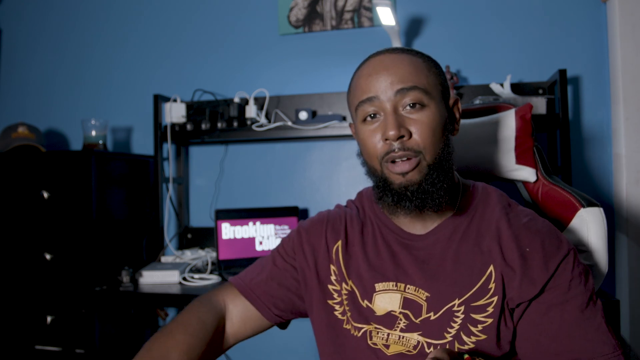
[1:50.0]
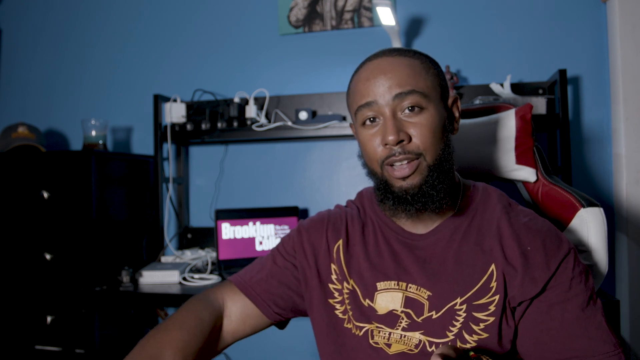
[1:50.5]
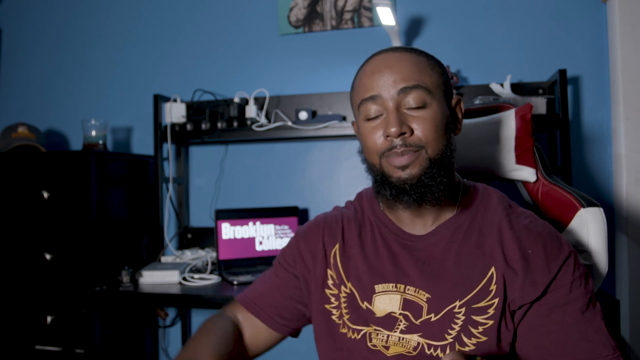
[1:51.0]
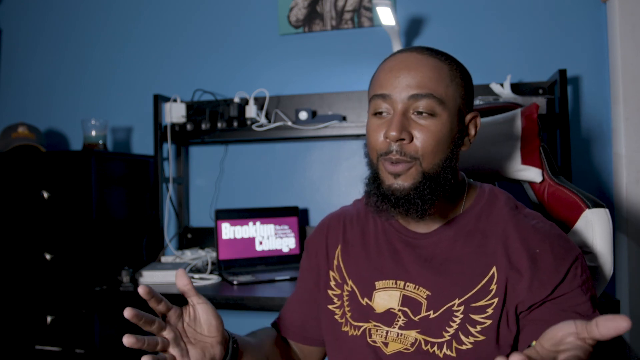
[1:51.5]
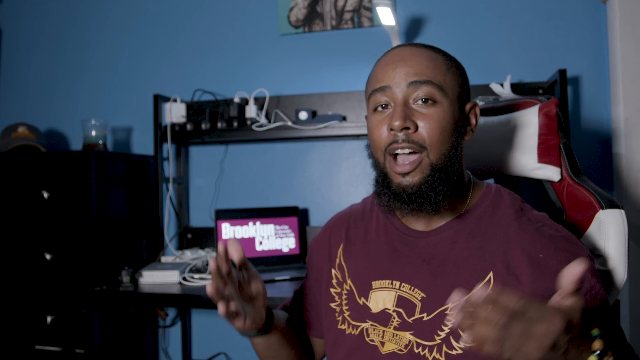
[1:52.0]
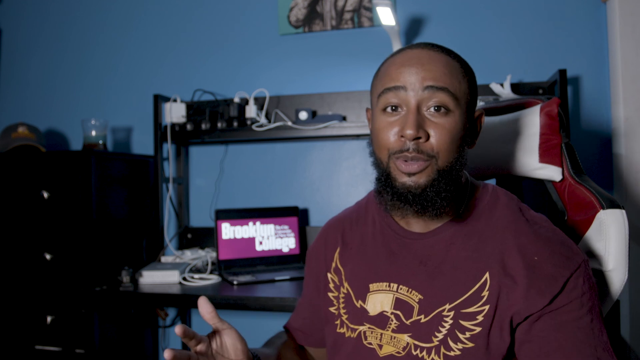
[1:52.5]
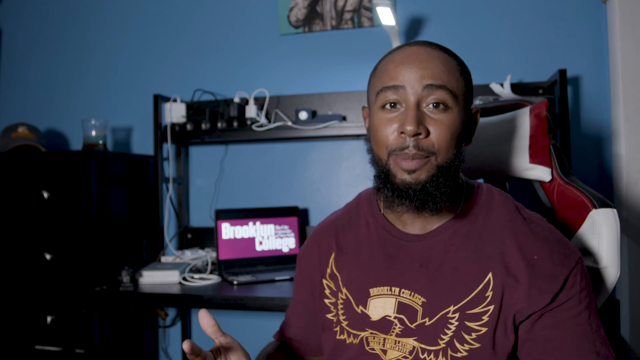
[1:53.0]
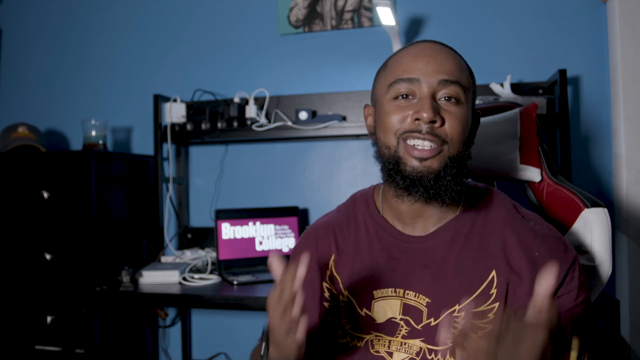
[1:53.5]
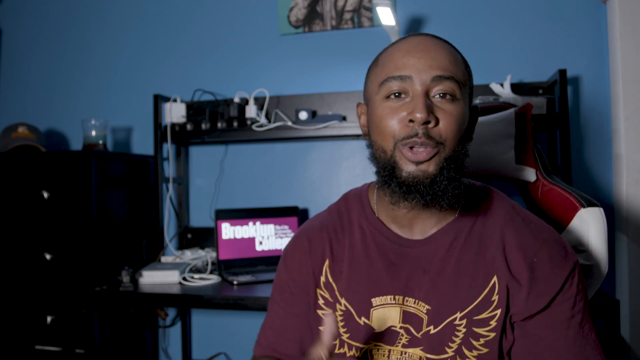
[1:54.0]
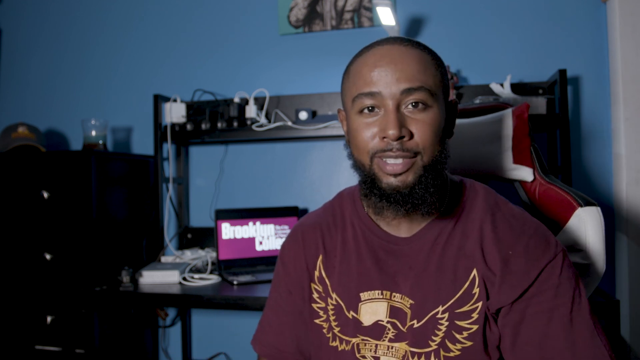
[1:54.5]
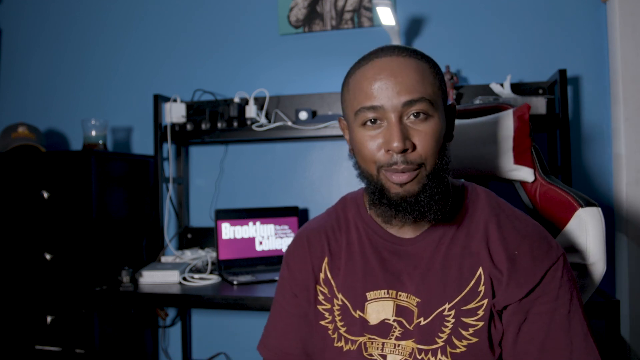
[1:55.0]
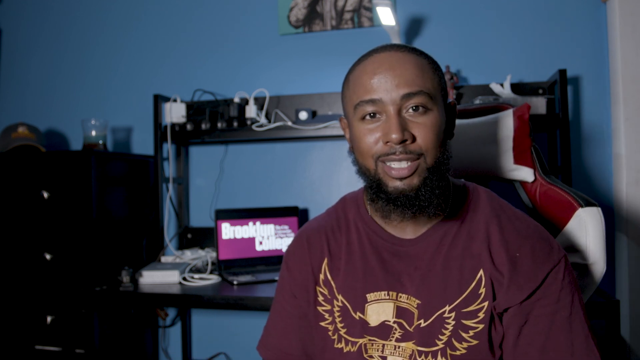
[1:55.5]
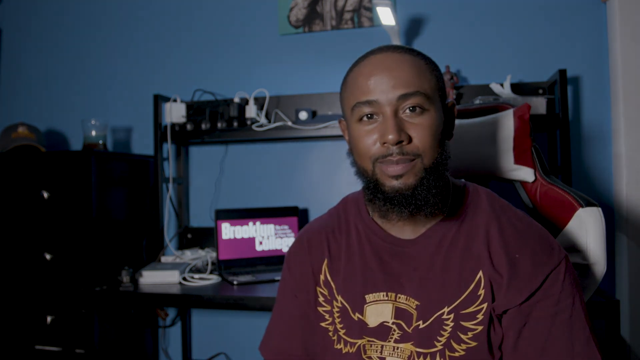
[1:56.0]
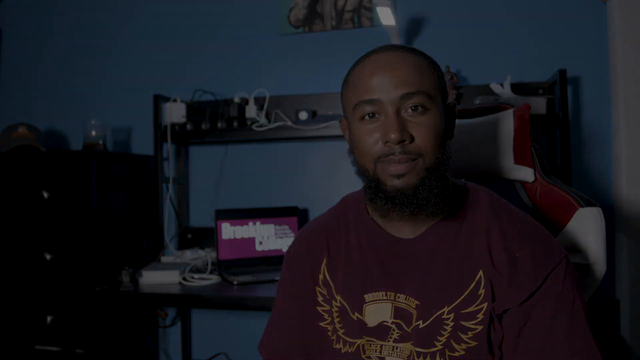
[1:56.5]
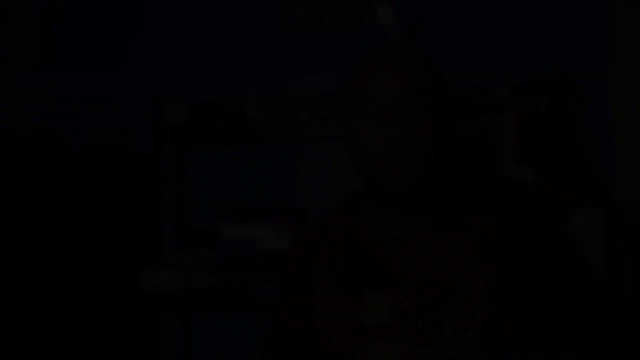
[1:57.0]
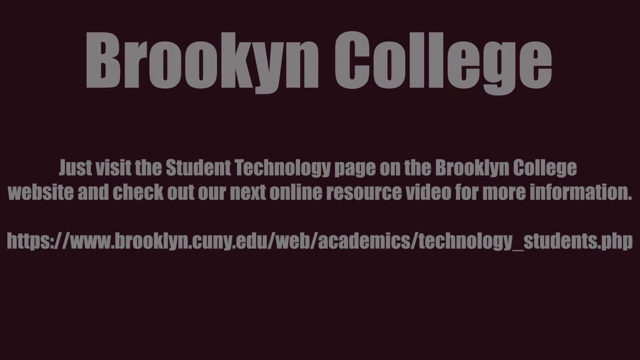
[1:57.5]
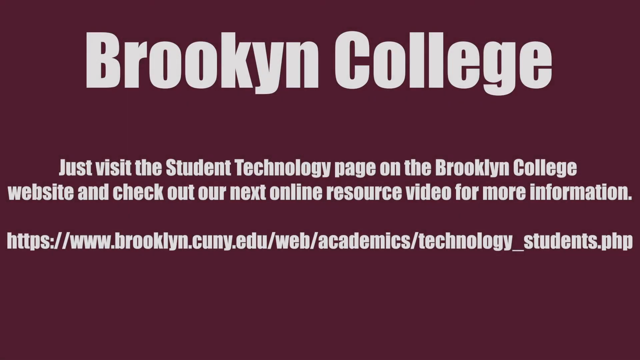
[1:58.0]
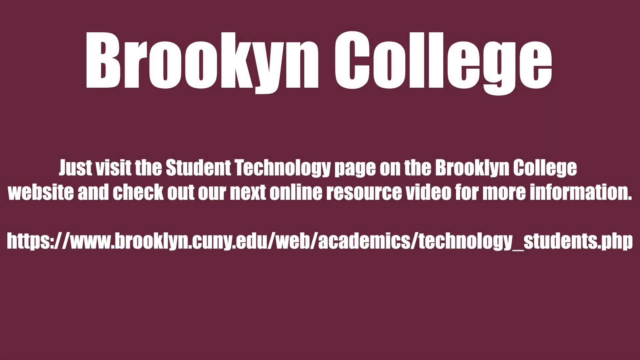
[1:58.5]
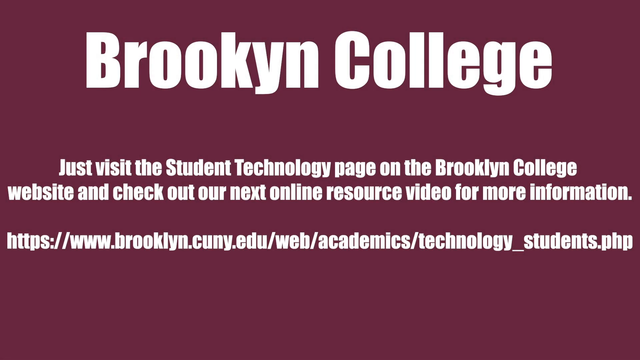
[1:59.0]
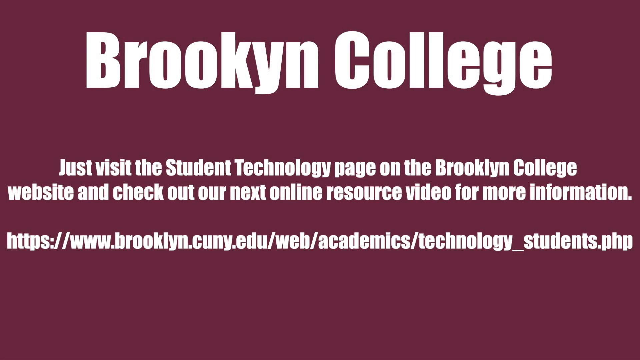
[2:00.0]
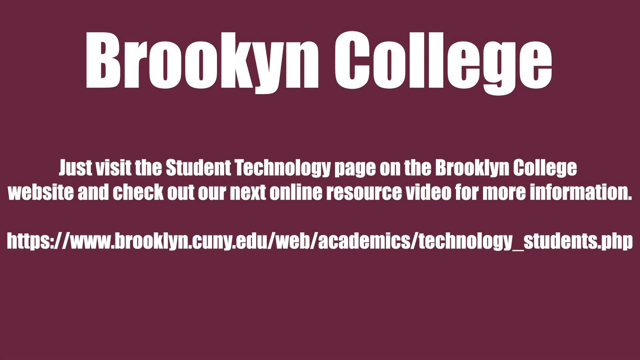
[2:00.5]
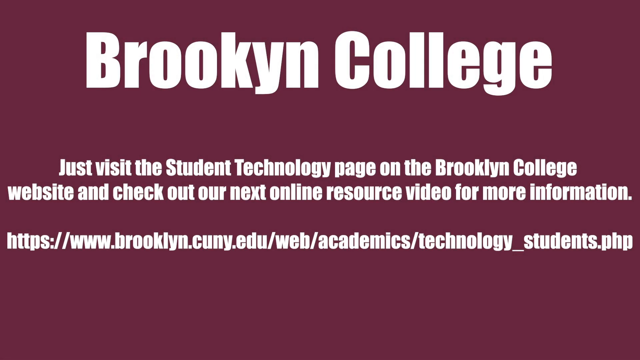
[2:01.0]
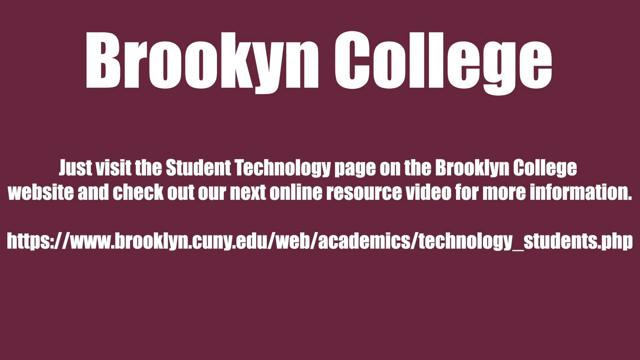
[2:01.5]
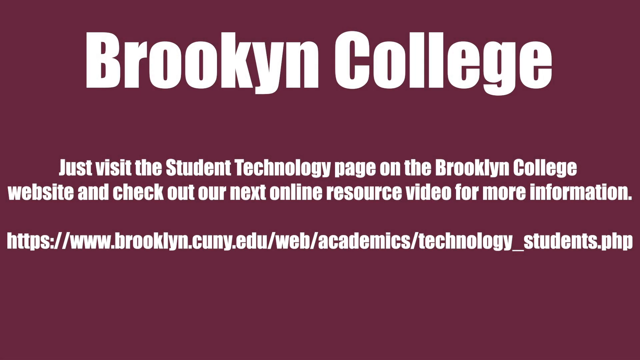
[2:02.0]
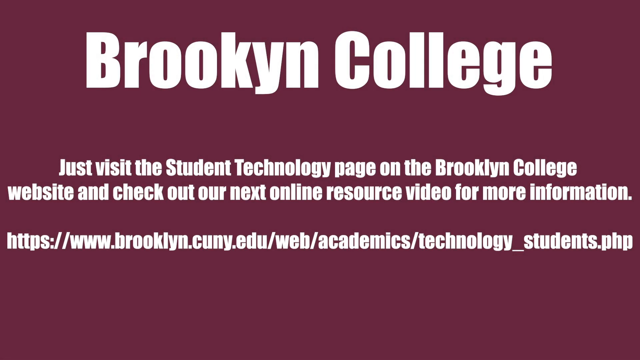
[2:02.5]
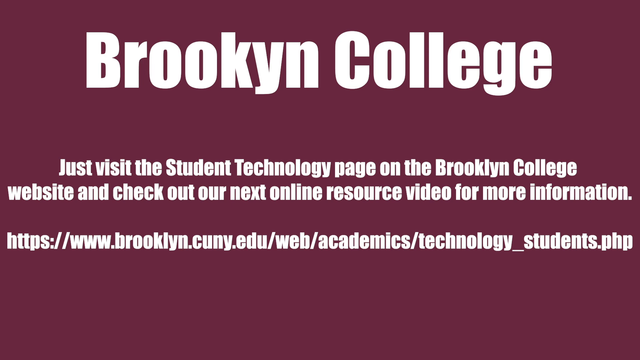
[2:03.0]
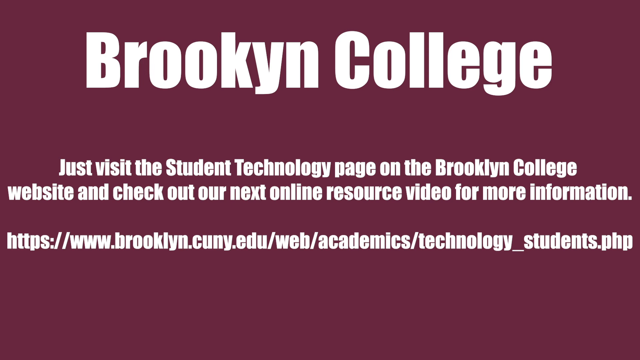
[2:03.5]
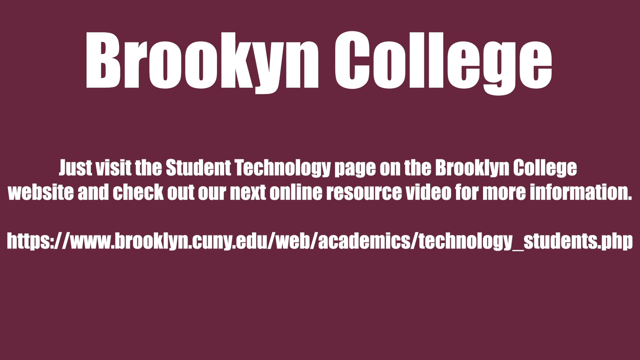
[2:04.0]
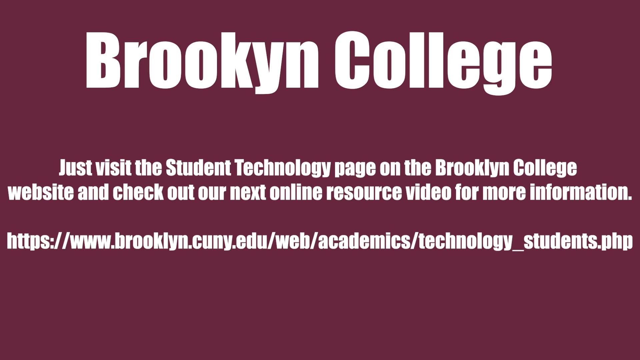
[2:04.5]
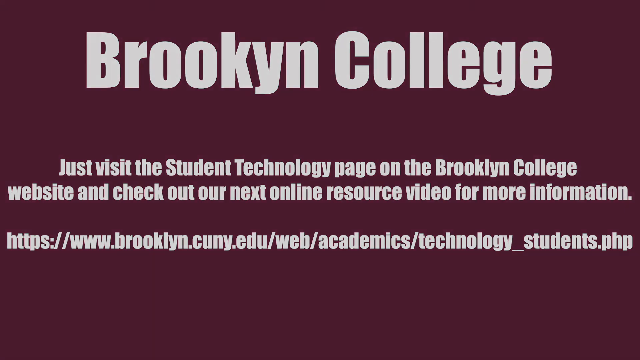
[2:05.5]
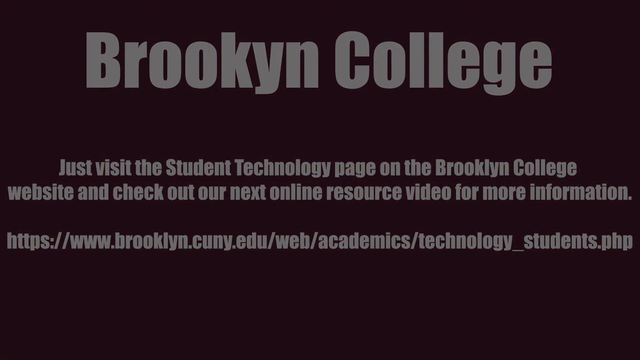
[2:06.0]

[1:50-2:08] The man who hosts the video continues talking with very enthusiastic hand gestures. Behind him is what appears to be an ice-blue wall with a multi-socket outlet on it; every socket has something plugged in, such as chargers for a computer or phone. A final Brooklyn College screen then appears, reading "just visit the student technology page on the Brooklyn College website and check out our next online resource video for more information," followed by a long web address ending in ".php." The video then fades to black at the end.